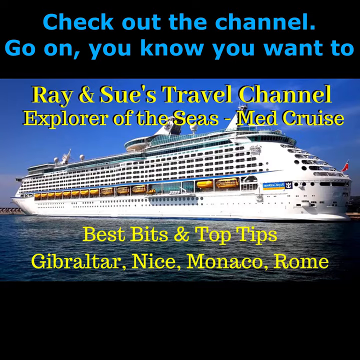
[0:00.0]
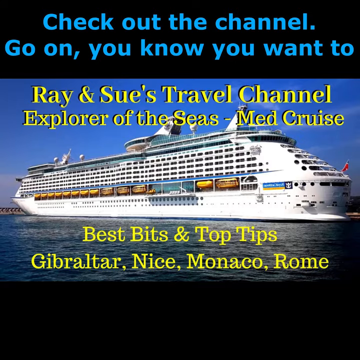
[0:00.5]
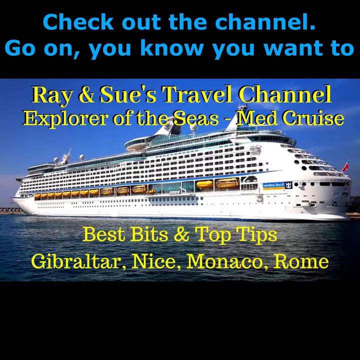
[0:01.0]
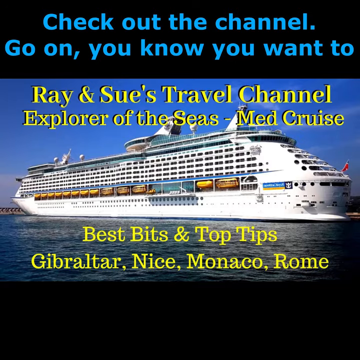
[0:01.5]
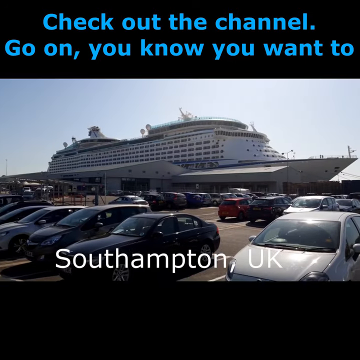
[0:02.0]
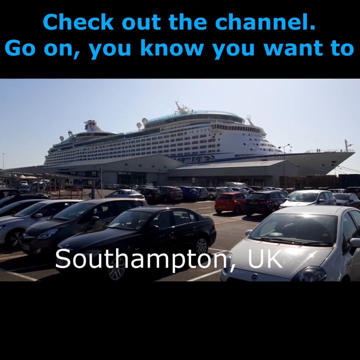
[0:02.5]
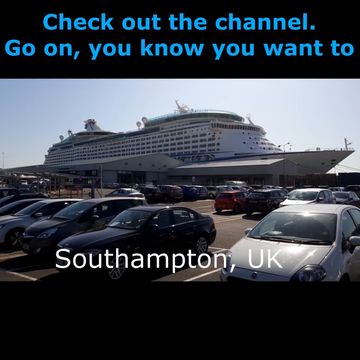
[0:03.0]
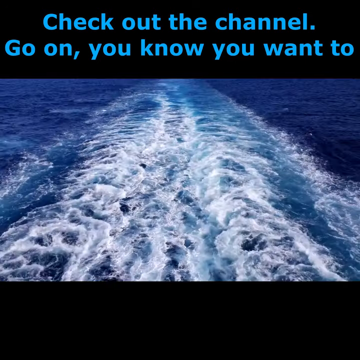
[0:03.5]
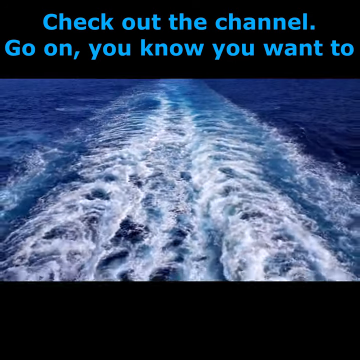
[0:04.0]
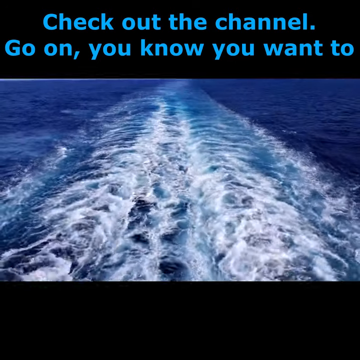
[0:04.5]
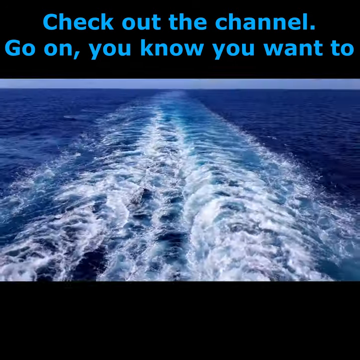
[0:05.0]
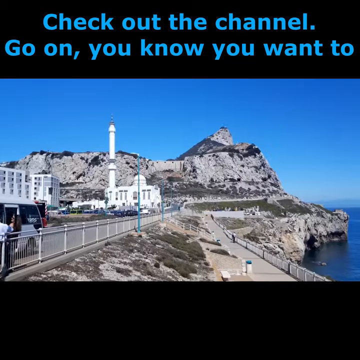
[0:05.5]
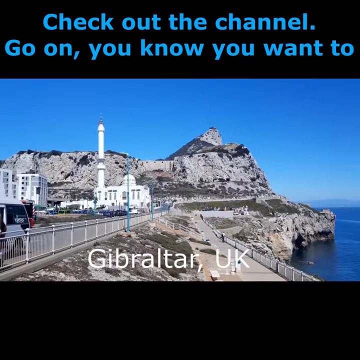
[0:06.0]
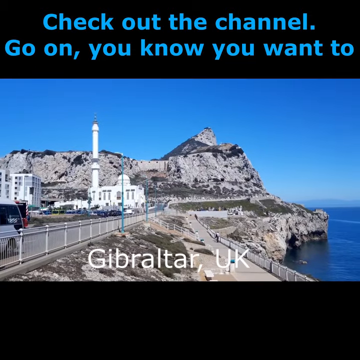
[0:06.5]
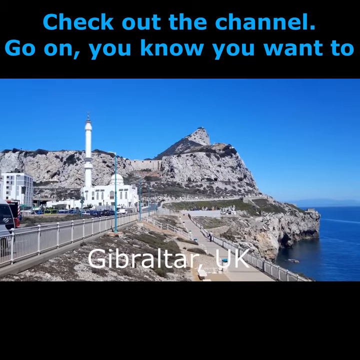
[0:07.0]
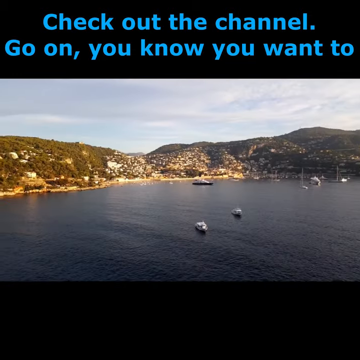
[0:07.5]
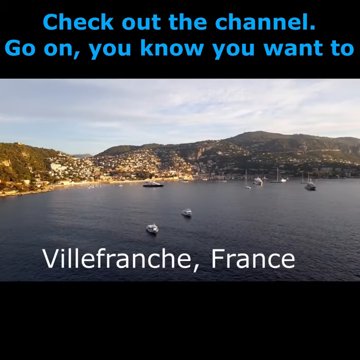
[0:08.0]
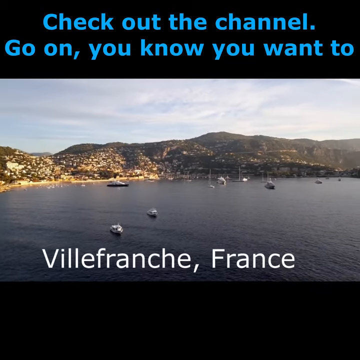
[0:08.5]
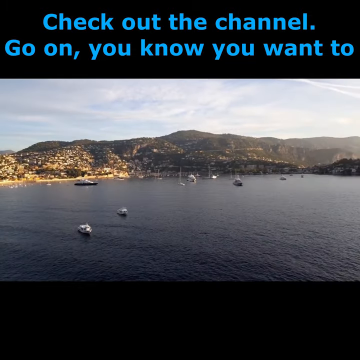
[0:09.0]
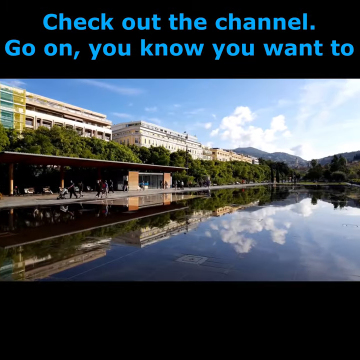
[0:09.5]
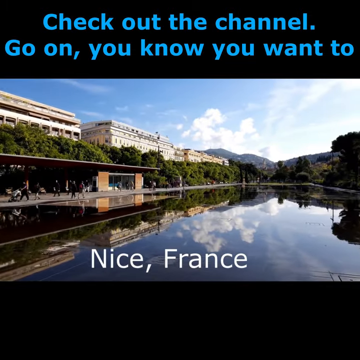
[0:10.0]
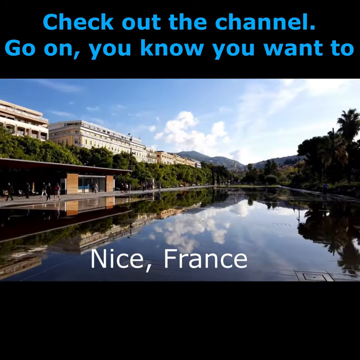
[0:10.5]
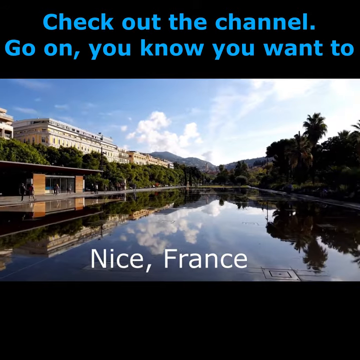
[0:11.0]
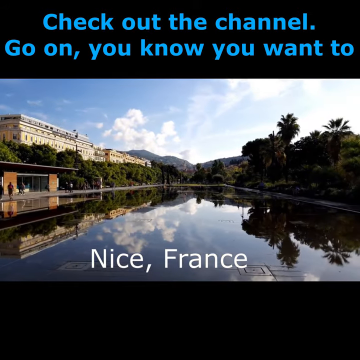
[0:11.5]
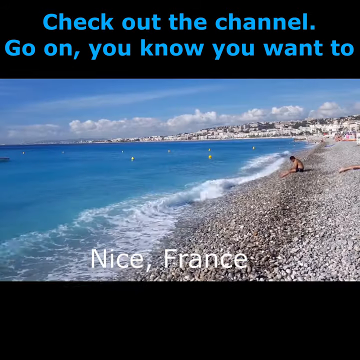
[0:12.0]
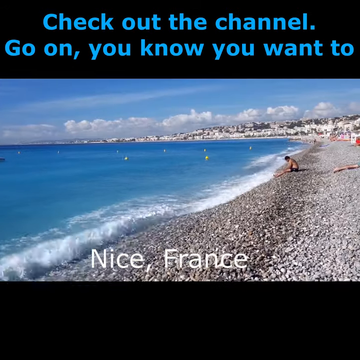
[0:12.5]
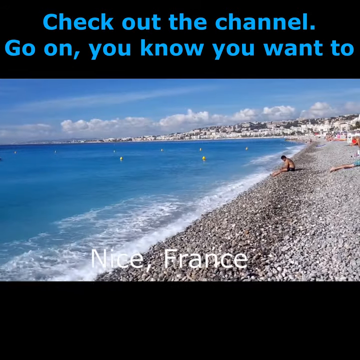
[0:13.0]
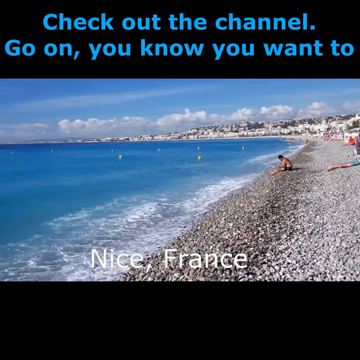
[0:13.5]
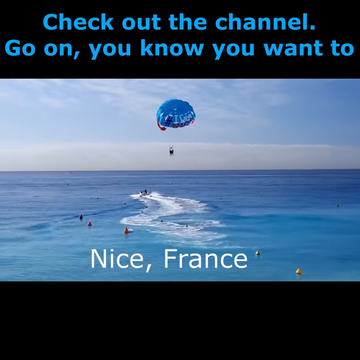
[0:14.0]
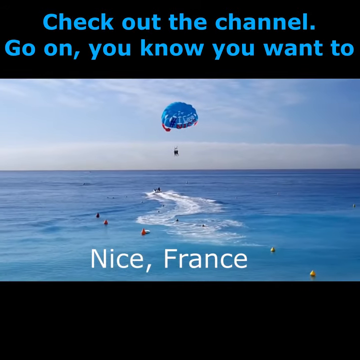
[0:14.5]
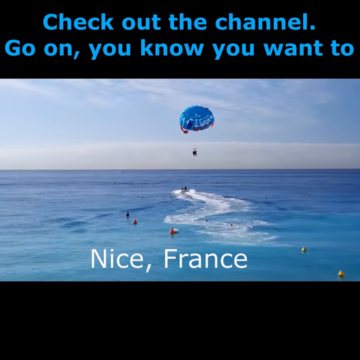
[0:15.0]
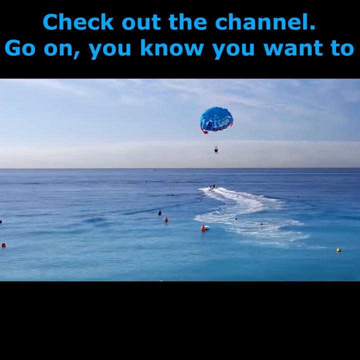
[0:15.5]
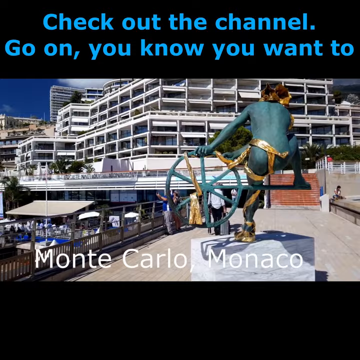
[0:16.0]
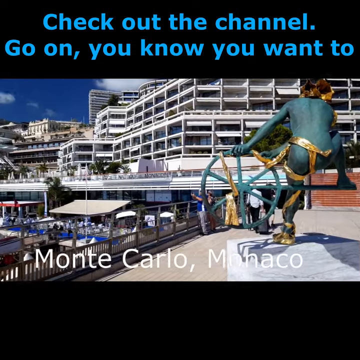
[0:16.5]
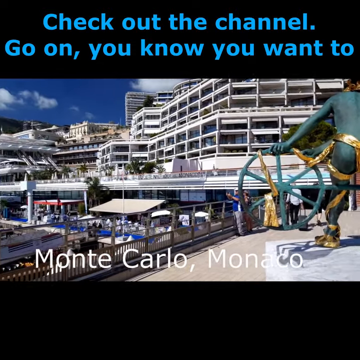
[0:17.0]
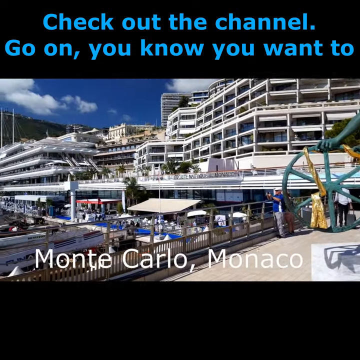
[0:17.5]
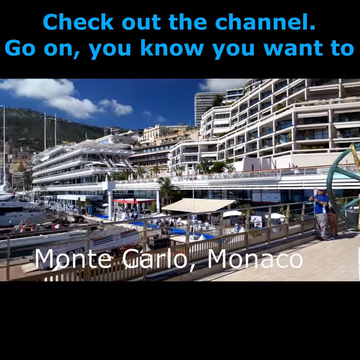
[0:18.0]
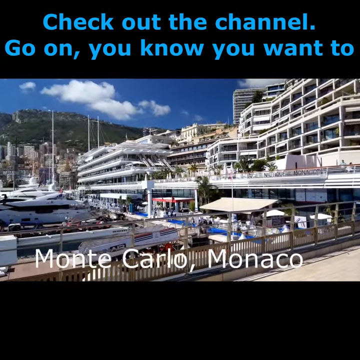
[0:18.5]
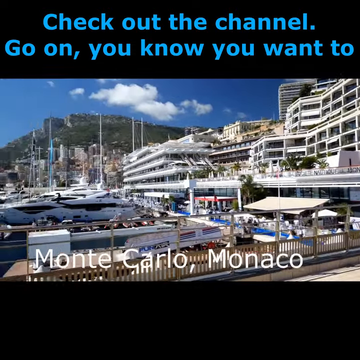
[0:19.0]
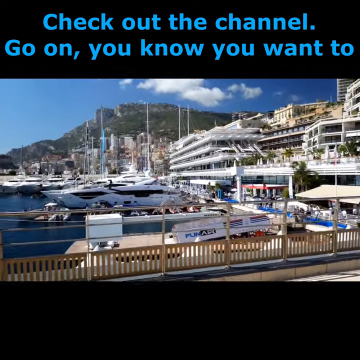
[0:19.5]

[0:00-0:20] Against a black background, blue text at the top reads "check out the channel go on you know you want to." A video or photo of a cruise ship appears with a large body of water, and yellow text on it reads "Ray and Sue's travel channel Explorer of the Seas med cruise best bits and top tips Gibraltar Nice Monaco Rome." Next comes a video with white text on the screen reading "Southampton UK," showing the cruise ship and a parking lot with many different parked cars. A shot of water follows, with what look to be ripples, maybe from a boat. An area of rocky terrain appears with some large, tall buildings and white text reading "Gibraltar United Kingdom." Footage from a location in France shows boats in the water and mountainous areas. Another location, Nice, France, shows people walking, a large body of water reflecting some clouds, buildings on the left side, and a bunch of trees. A person sits, kind of on a beach, on a bunch of rocks beside blue water, with white text reading "Nice France." Someone in a parachute kind of hovers over the blue water, and there are some little red objects in the water. Footage from Monte Carlo, Monaco shows a green statue of a man, very large buildings, trees, and people walking.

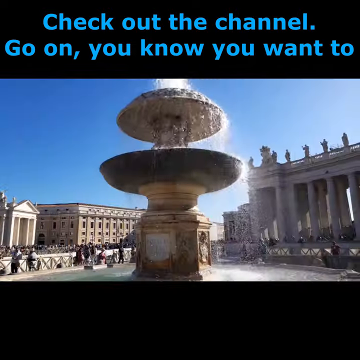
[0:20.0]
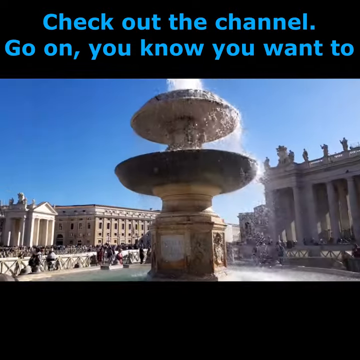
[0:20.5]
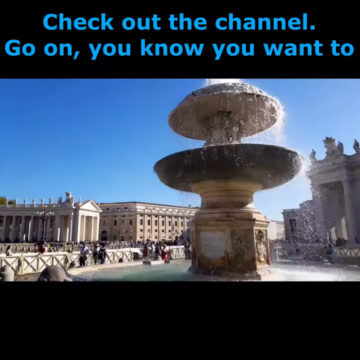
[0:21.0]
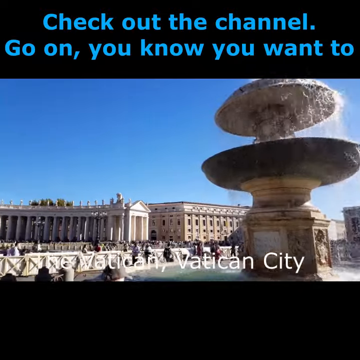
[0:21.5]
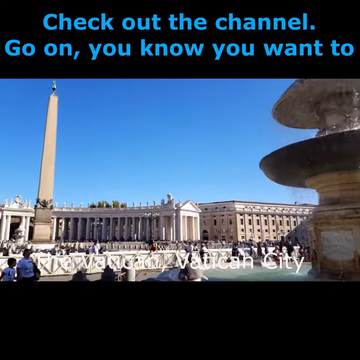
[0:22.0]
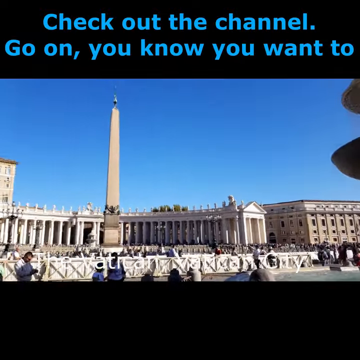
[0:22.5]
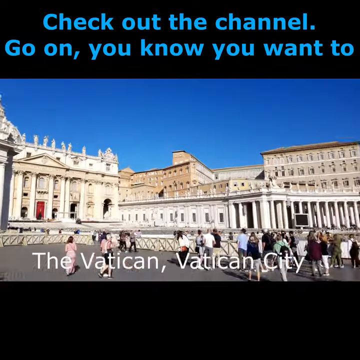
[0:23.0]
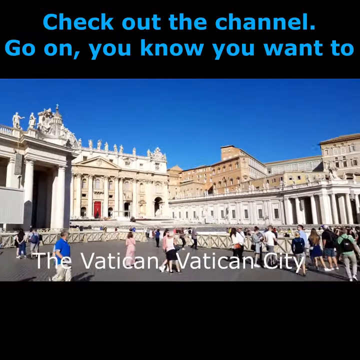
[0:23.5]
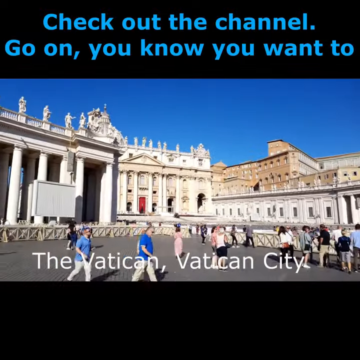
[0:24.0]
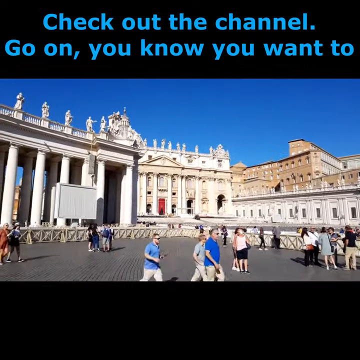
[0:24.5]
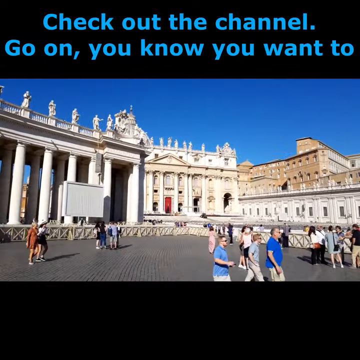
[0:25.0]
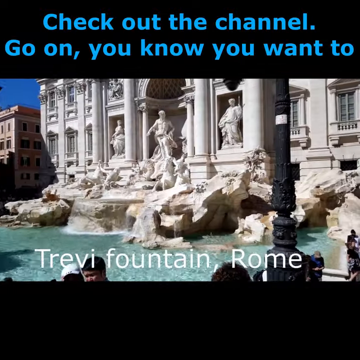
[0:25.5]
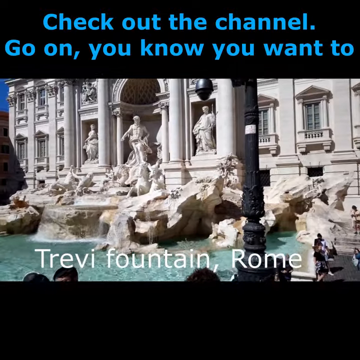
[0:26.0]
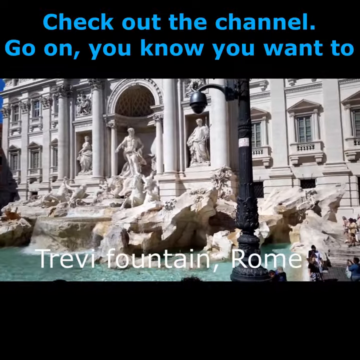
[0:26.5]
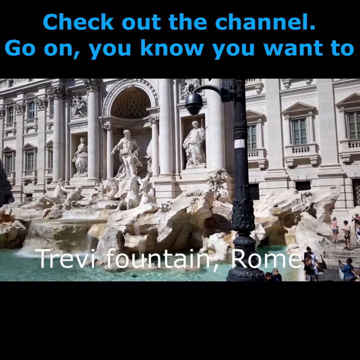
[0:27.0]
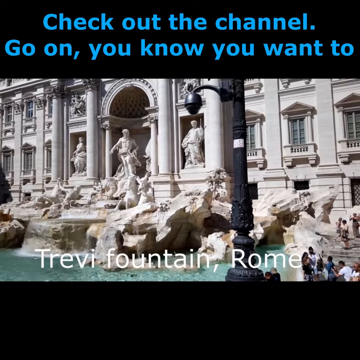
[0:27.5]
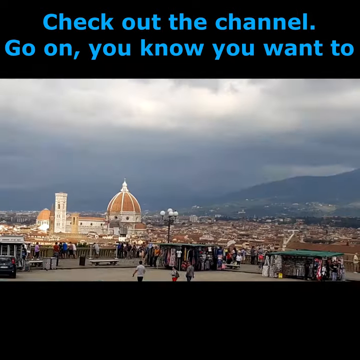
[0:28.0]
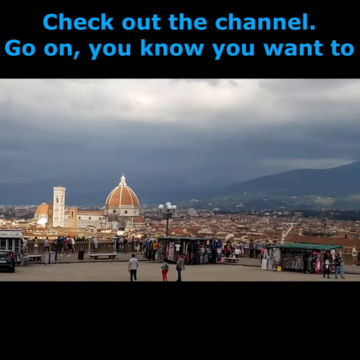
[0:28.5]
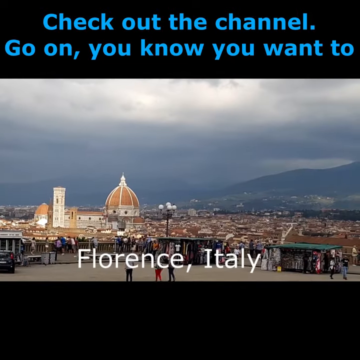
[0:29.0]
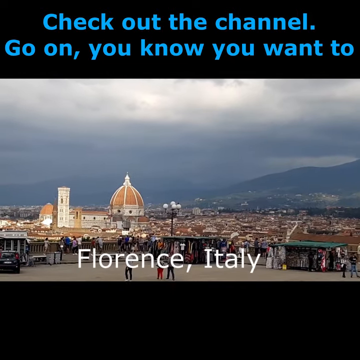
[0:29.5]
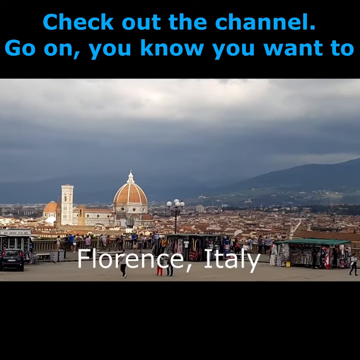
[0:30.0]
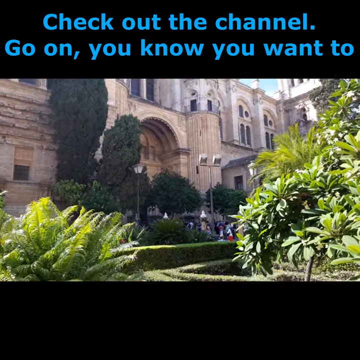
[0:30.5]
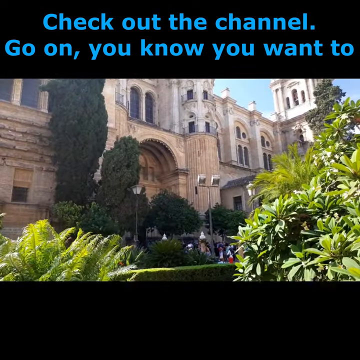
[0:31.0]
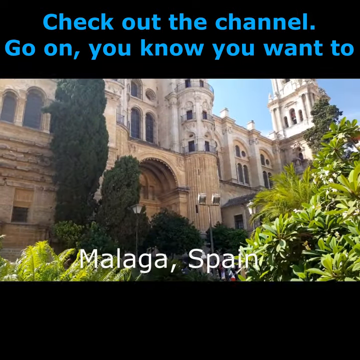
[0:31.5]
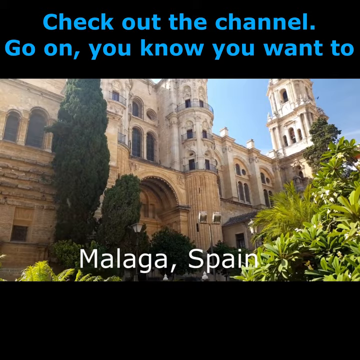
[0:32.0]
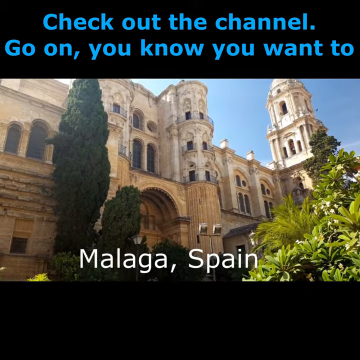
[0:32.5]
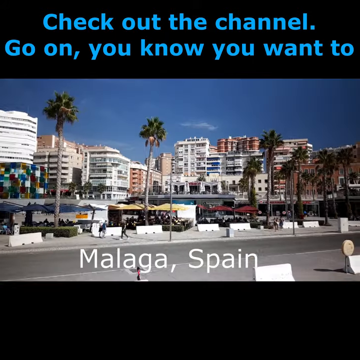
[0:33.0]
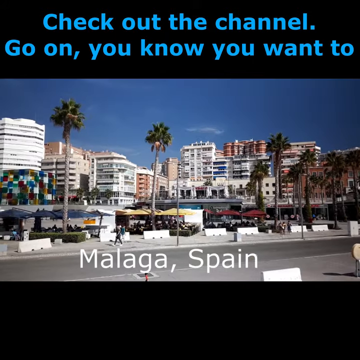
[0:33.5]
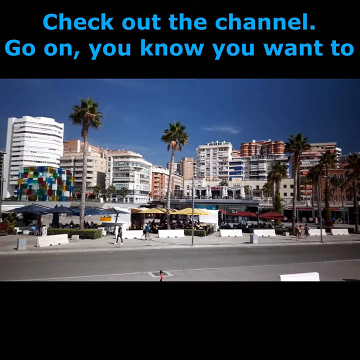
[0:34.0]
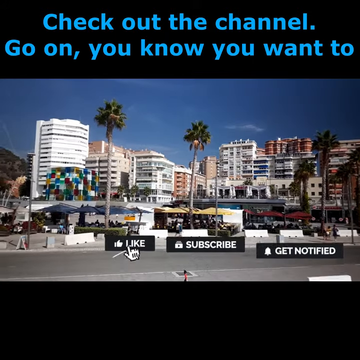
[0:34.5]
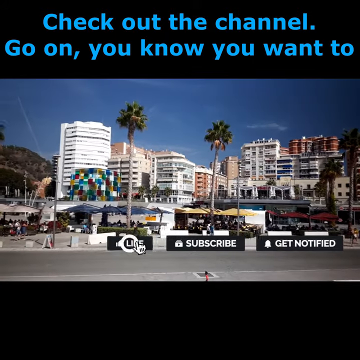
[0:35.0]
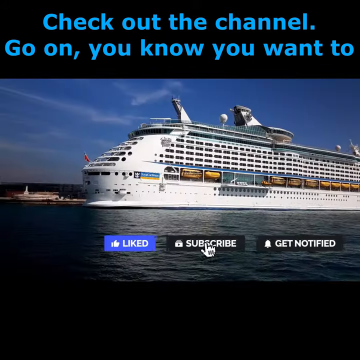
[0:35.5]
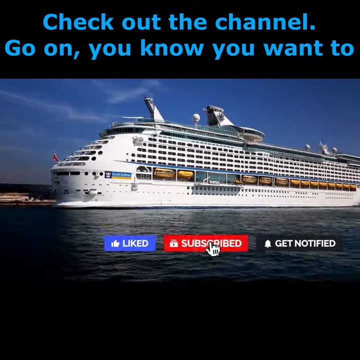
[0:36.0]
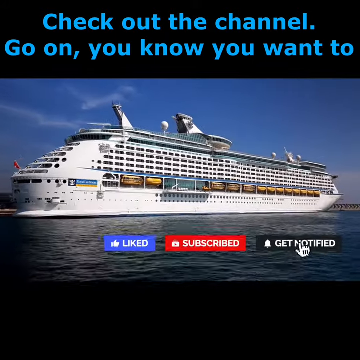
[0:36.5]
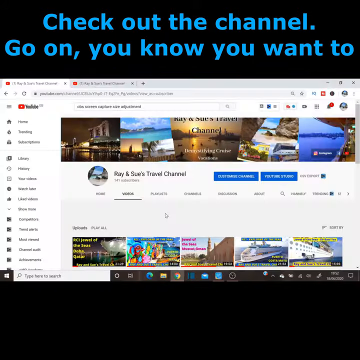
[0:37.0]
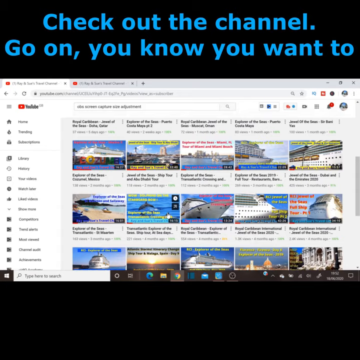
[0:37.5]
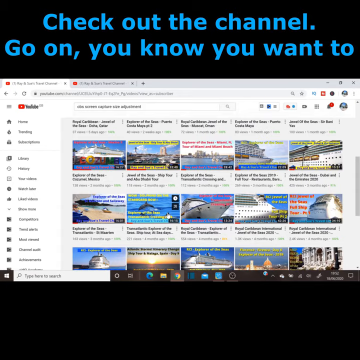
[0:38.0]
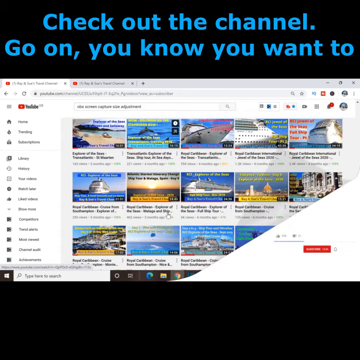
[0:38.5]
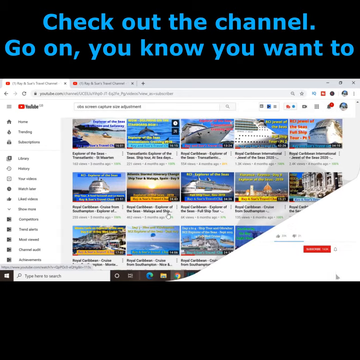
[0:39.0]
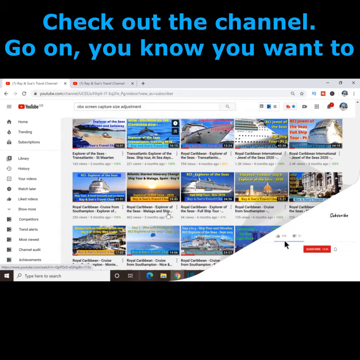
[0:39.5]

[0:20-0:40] Blue text at the top of a black background reads "check out the channel go on you know you want to." A very large fountain surrounded by buildings appears, with people walking by and text reading "the Vatican Vatican City." Next is the Trevi Fountain in Rome, with large buildings and people walking by, then Florence, Italy, with classic buildings and people walking by. Another very large building with trees and bushes is in Malaga, Spain, along with large trees and people walking along the street. Gray boxes with white text pop up reading "like" and "subscribe" as well as "get notified." A finger pops up and clicks the like button, then the subscribe button, then the get notified button. A picture of a YouTube channel called Ray and Sue's travel channel appears, and someone kind of scrolls through its different videos. A little page kind of pops up at the bottom of the image, and a mouse moves over to the like button; the text says "like and subscribe."